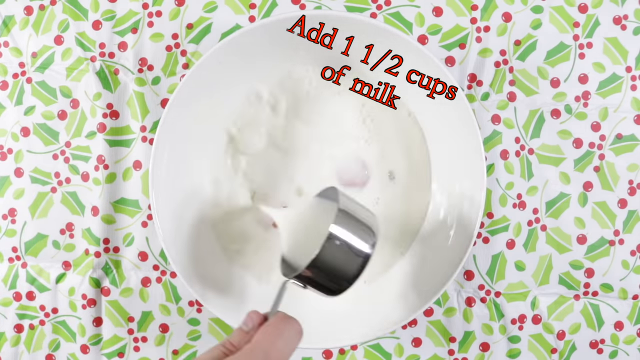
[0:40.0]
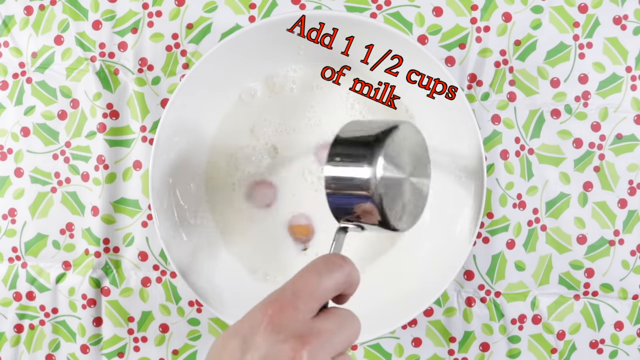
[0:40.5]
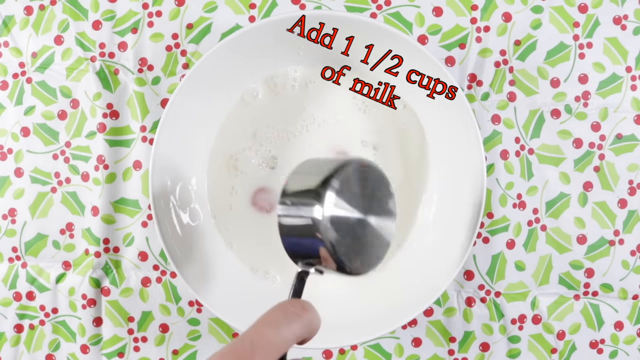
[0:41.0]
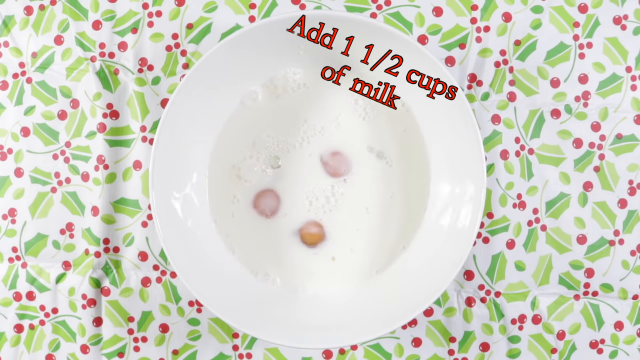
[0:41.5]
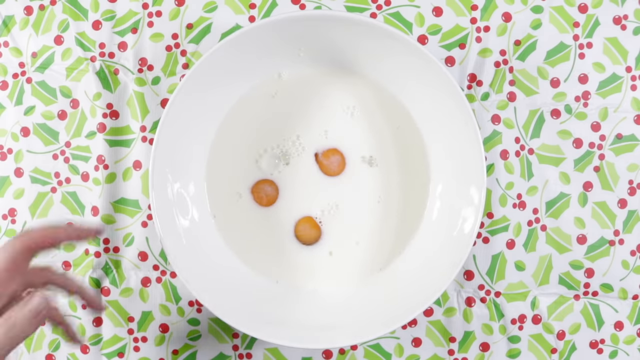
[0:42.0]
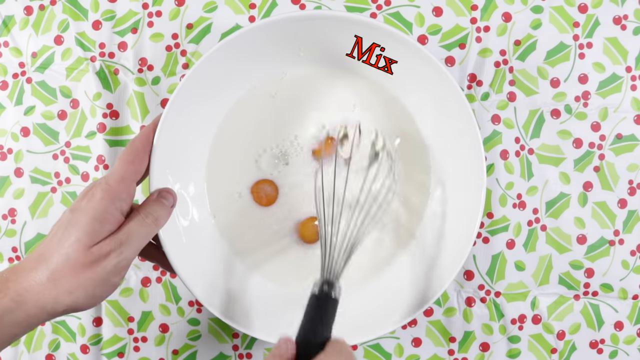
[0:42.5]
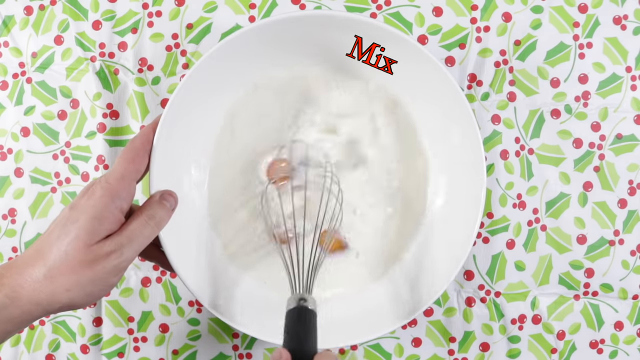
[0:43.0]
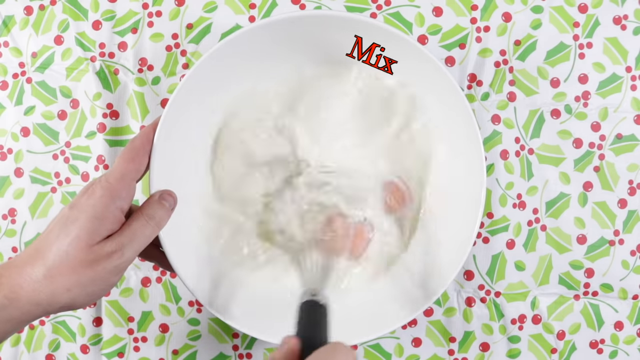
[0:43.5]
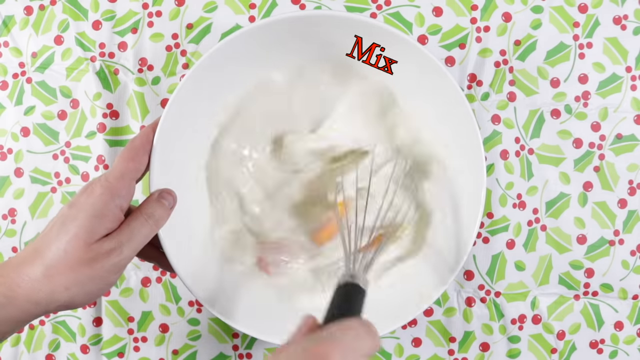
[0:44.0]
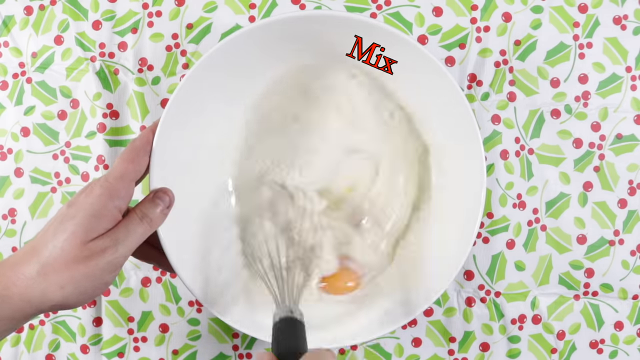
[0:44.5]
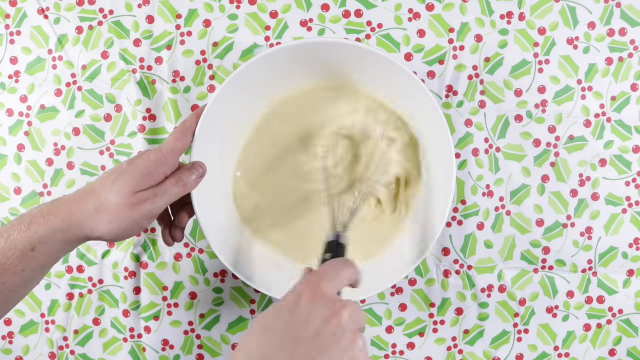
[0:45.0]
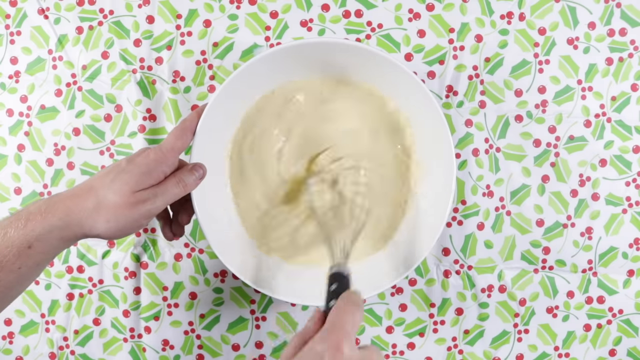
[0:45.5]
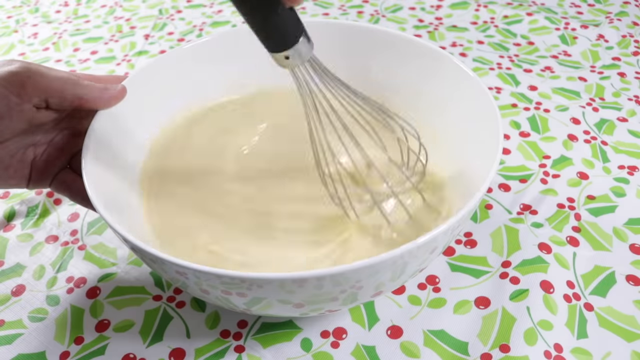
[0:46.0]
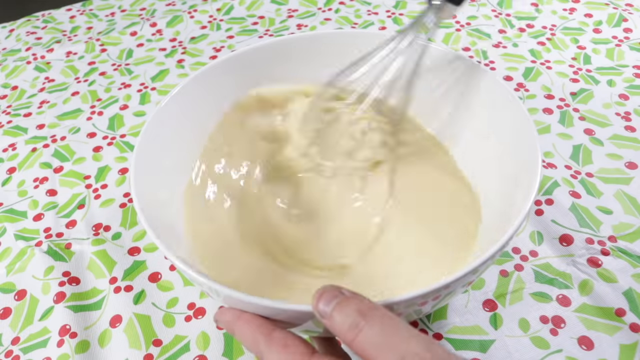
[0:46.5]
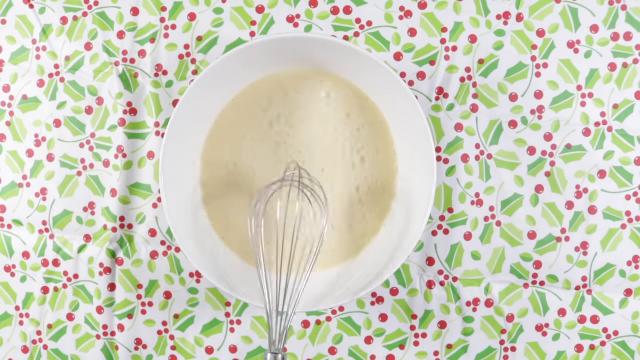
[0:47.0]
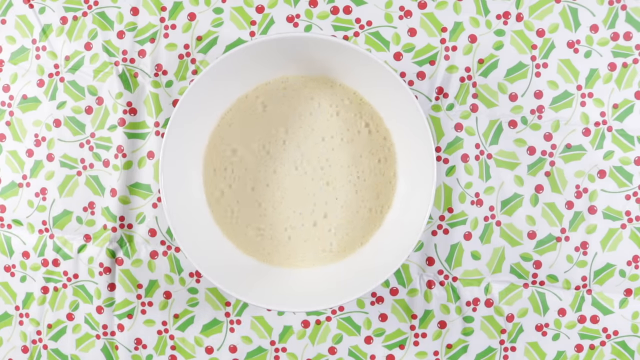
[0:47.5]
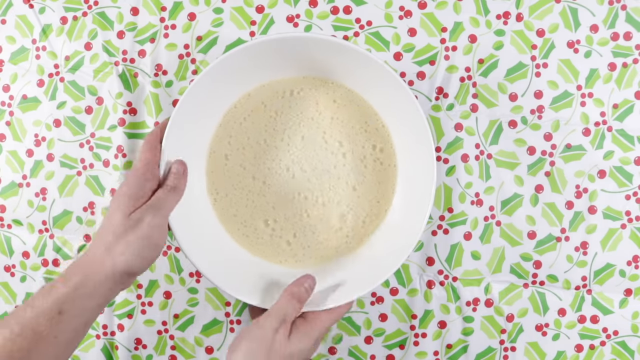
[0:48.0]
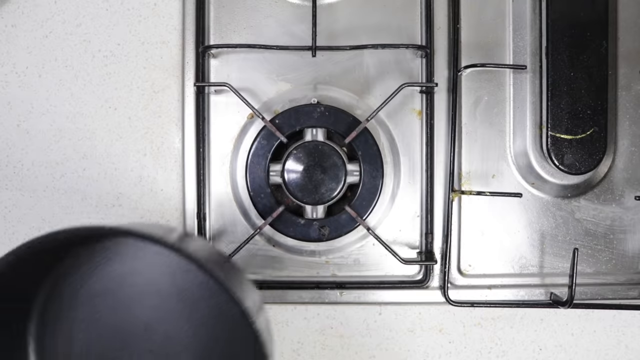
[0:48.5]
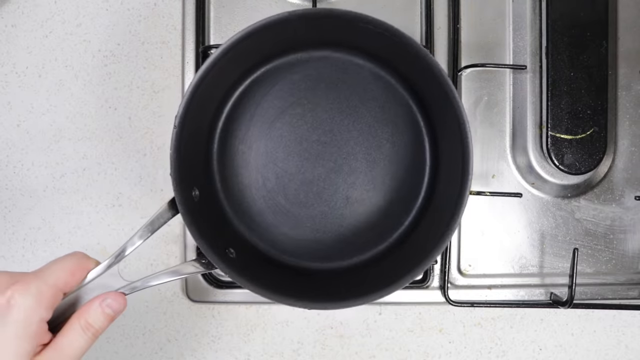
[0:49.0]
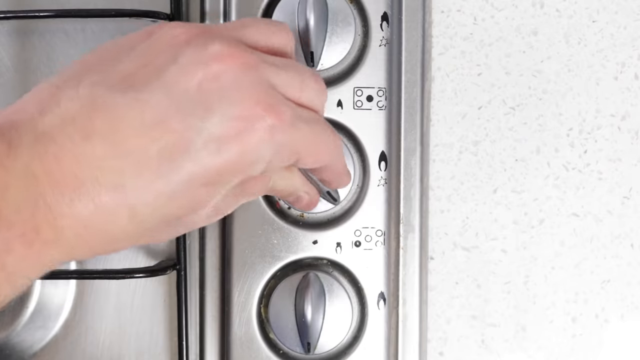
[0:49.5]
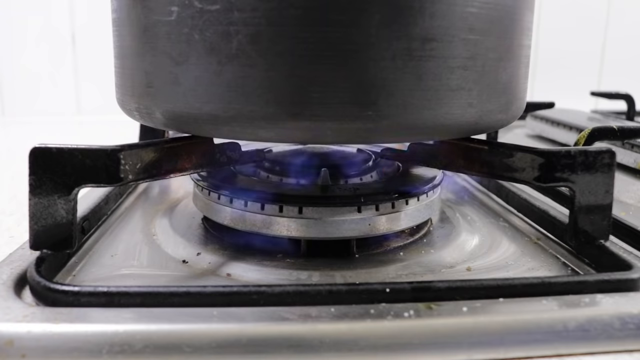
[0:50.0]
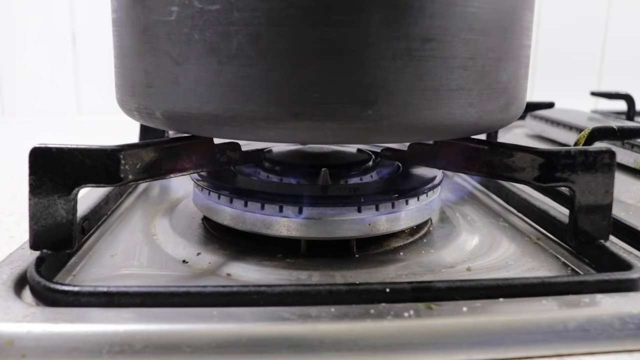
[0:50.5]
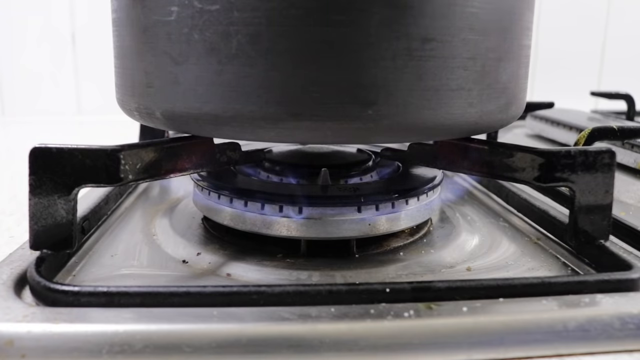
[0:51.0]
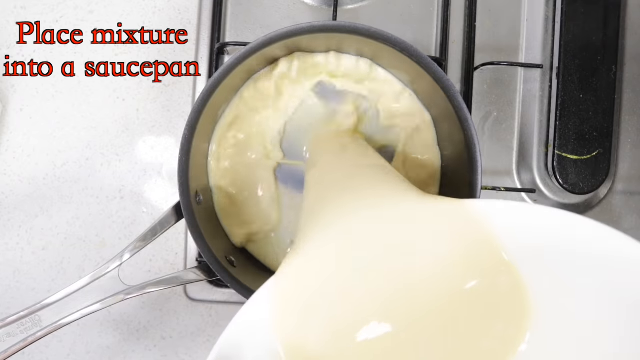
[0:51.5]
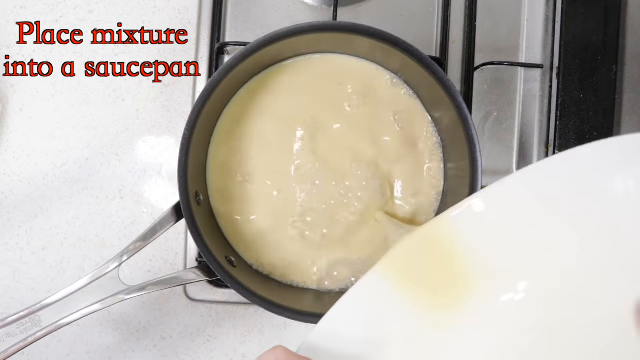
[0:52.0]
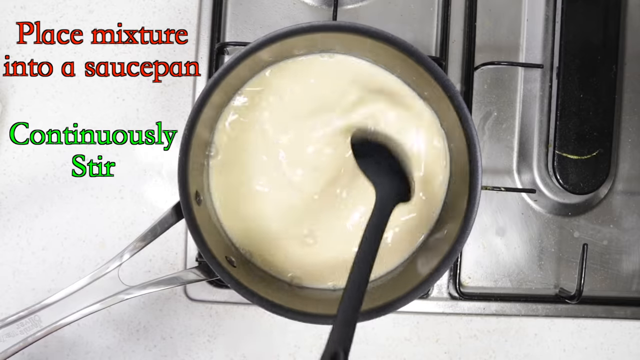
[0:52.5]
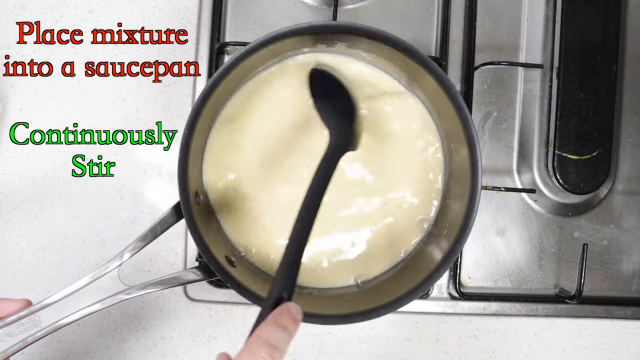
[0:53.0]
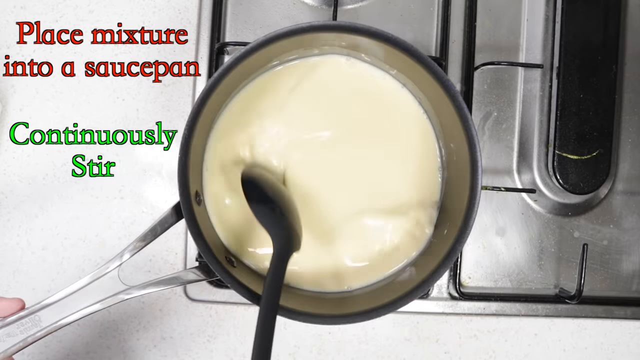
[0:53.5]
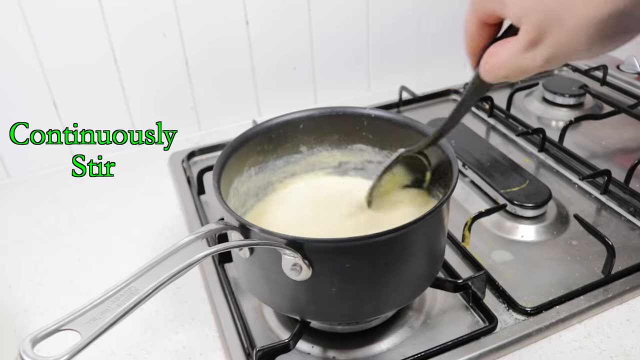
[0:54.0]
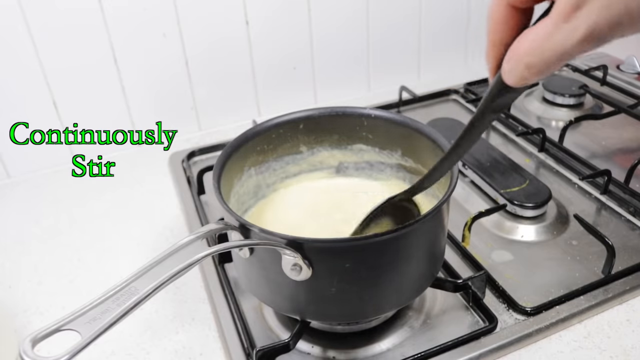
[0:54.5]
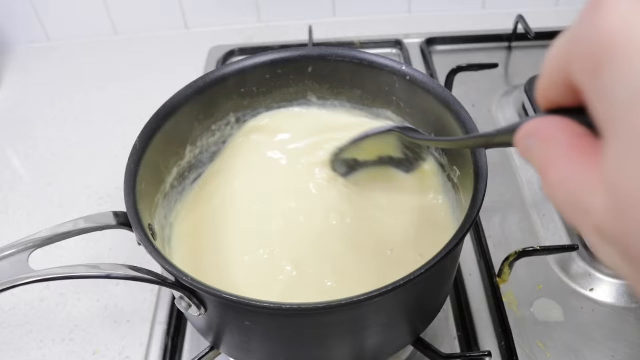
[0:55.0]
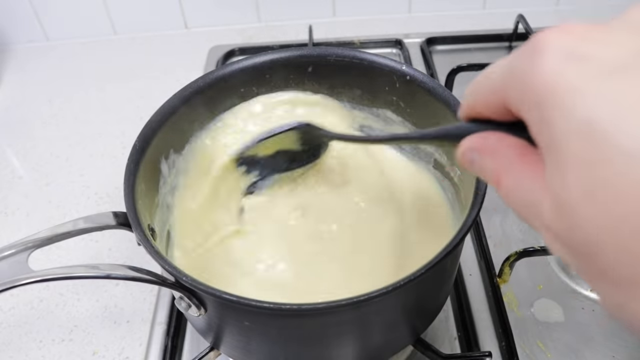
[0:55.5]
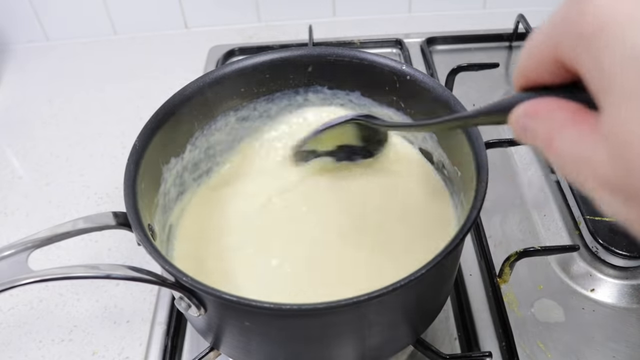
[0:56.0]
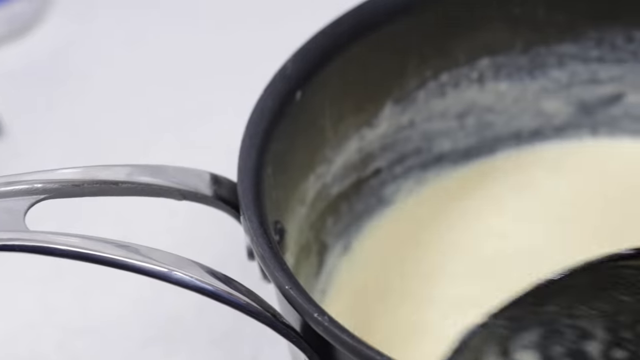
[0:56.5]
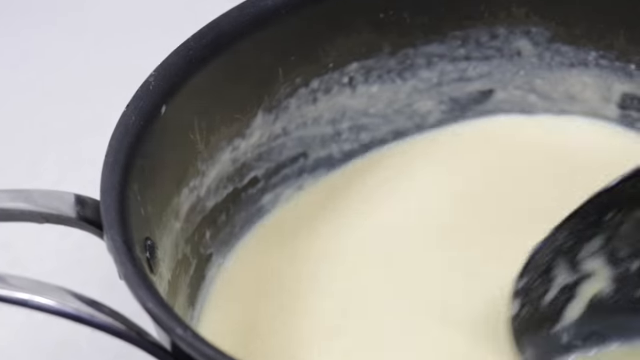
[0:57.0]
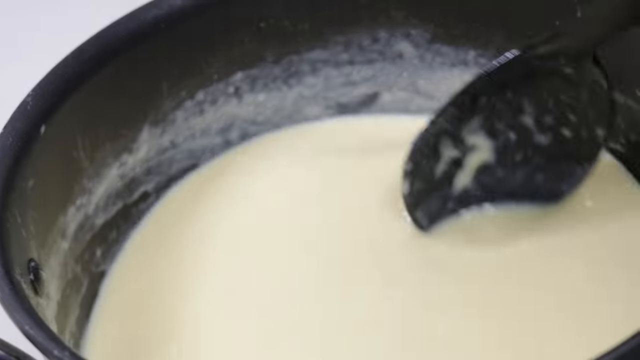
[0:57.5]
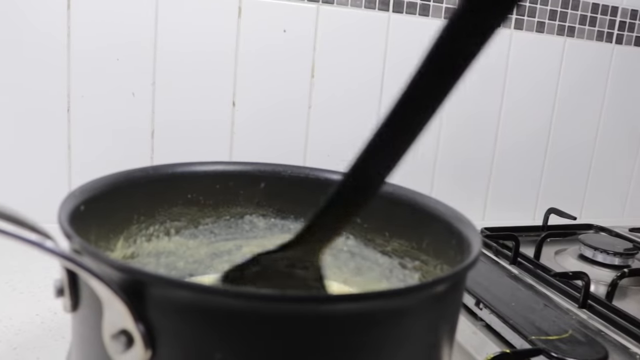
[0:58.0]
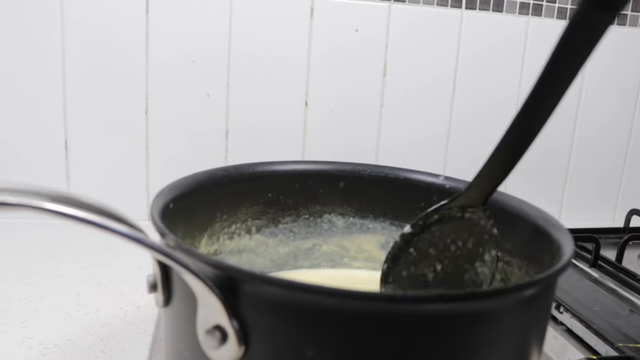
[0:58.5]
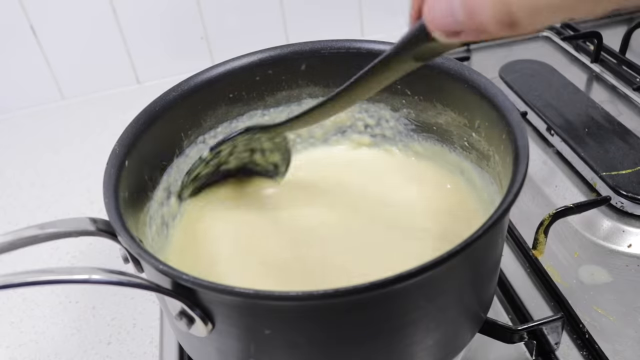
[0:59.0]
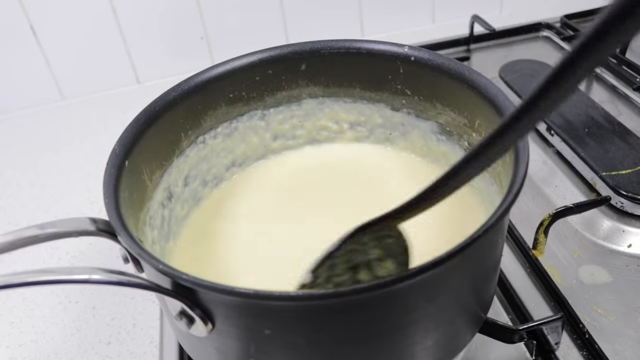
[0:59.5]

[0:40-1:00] The hand shakes the rest of the milk out of the spoon into the bowl, and the ingredients swish about and settle. The text "MIX" appears in the top right. One hand places a wire whisk into the bowl while the other holds the bowl from the left side. The whisk is swished around, combining the ingredients, shown from multiple angles, until the liquid is a solid yellowish white. The whisk is removed, and the bubbly liquid keeps swishing about before gradually settling. Both hands grab the bowl and remove it from the table. The camera cuts to a stove, where one hand places a pot onto a burner, then cuts to the dials as hands adjust the knobs, then to the burner, an open flame type, now on with the pot. Text in the top left says "place mixture into a saucepan, continuously stir". A hand stirs the liquid with a large black spoon, shown from multiple angles. The liquid begins to smoke and coats the side, and across multiple panning angles it gradually appears to become harder or more solid.